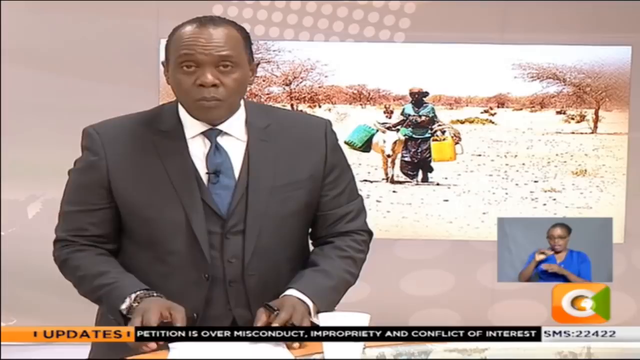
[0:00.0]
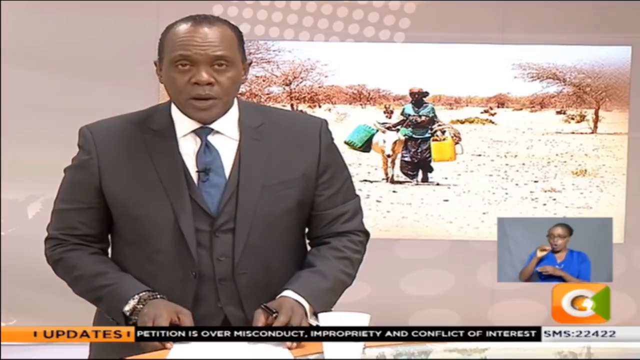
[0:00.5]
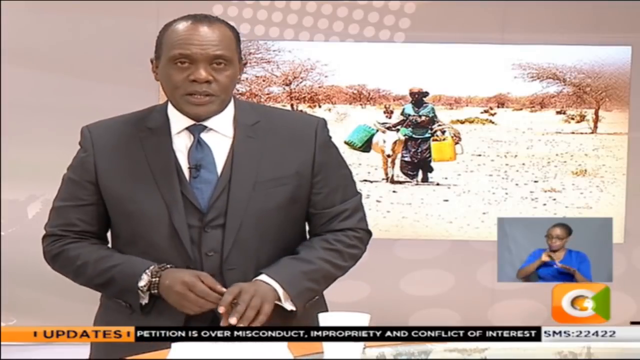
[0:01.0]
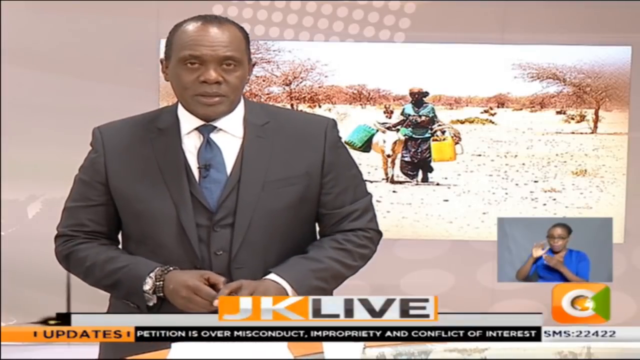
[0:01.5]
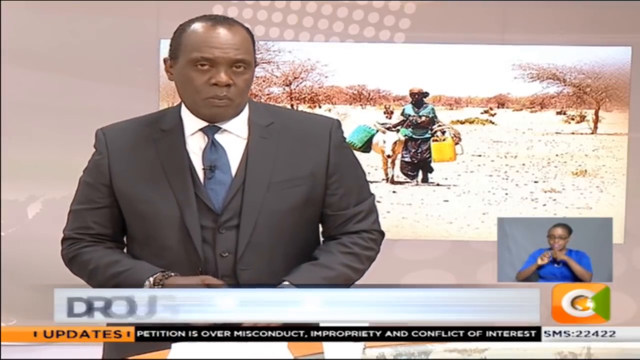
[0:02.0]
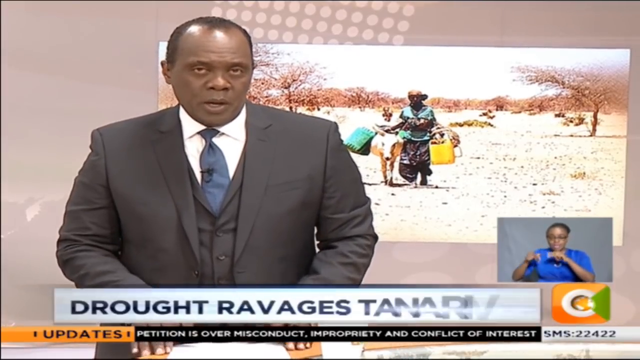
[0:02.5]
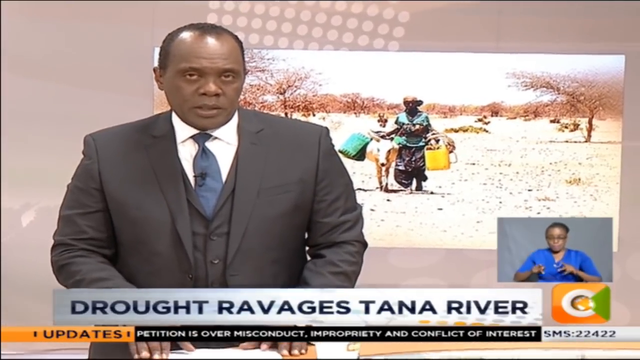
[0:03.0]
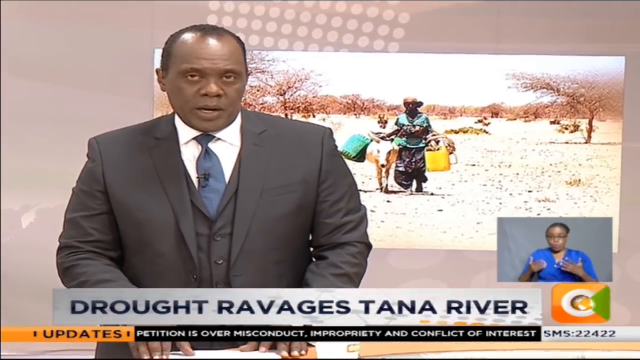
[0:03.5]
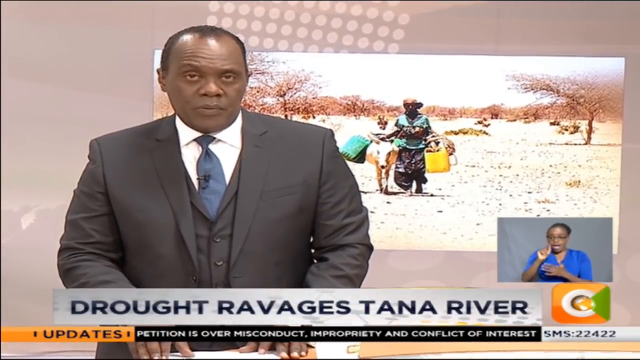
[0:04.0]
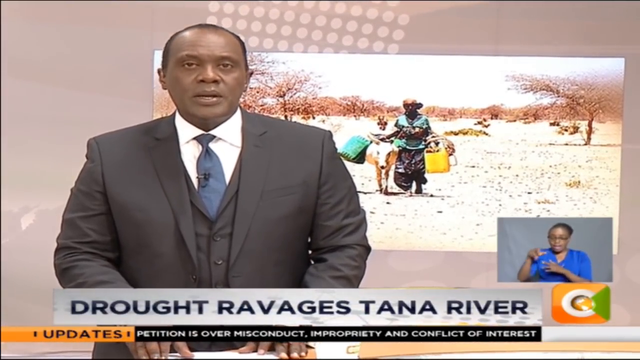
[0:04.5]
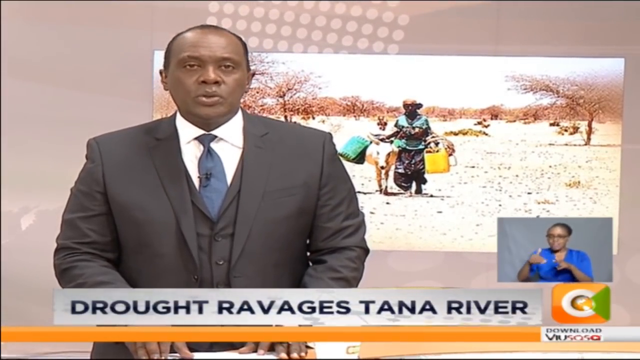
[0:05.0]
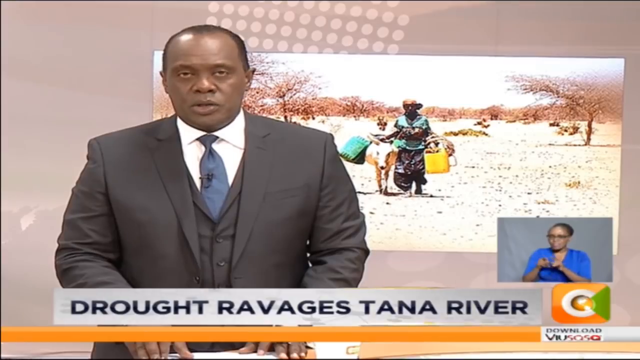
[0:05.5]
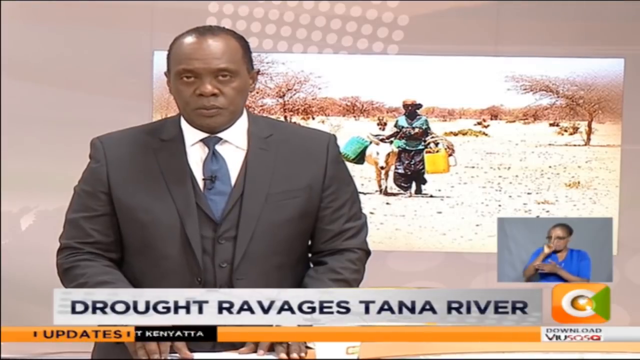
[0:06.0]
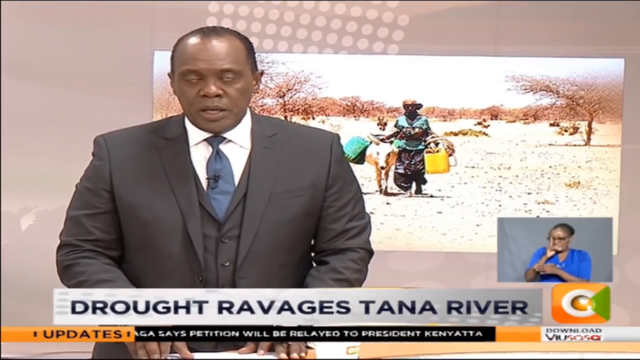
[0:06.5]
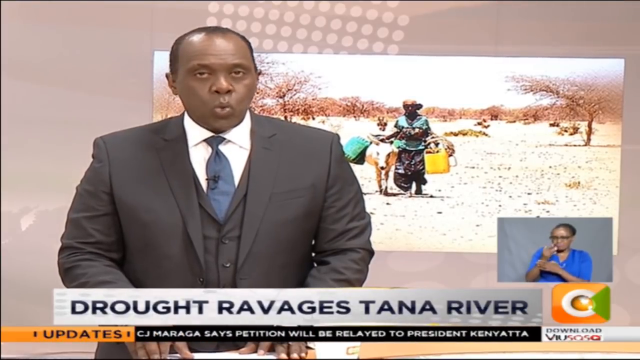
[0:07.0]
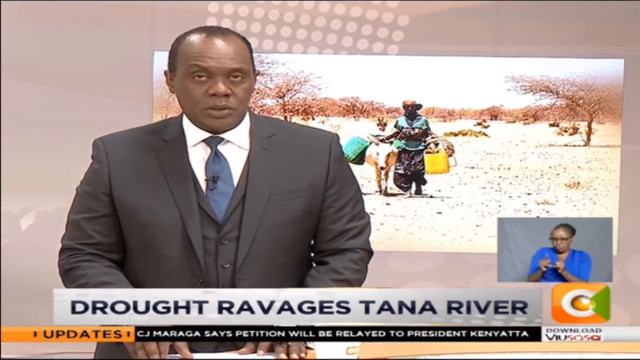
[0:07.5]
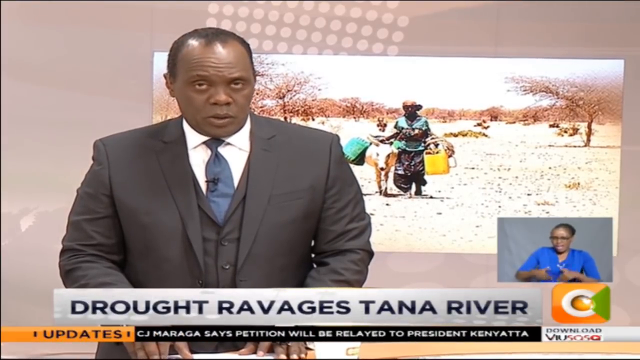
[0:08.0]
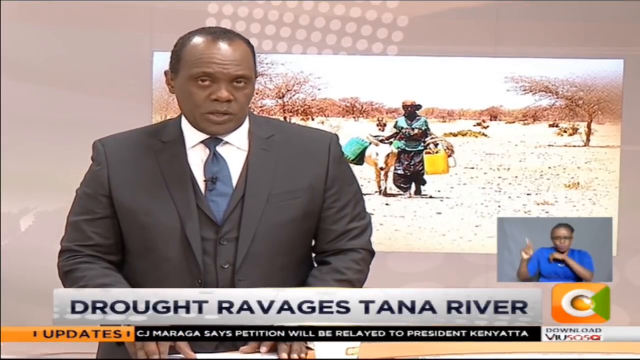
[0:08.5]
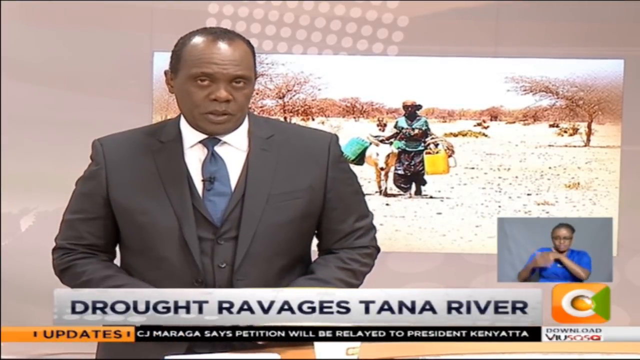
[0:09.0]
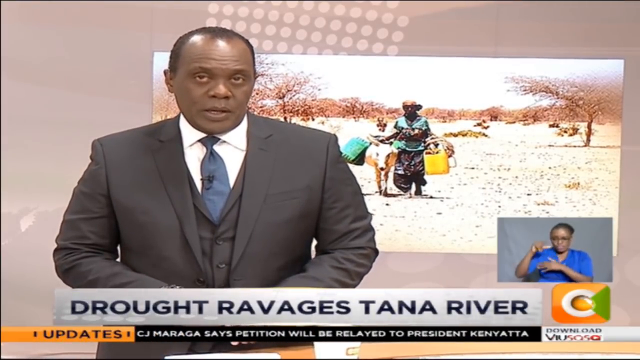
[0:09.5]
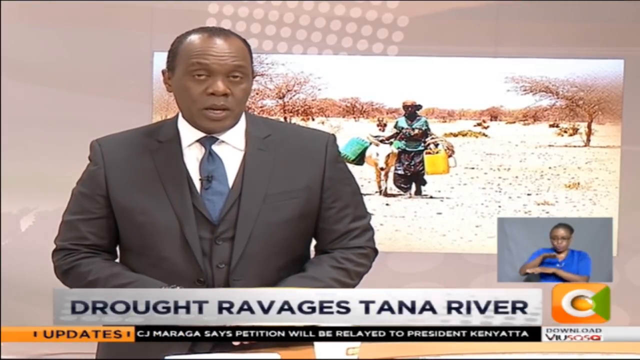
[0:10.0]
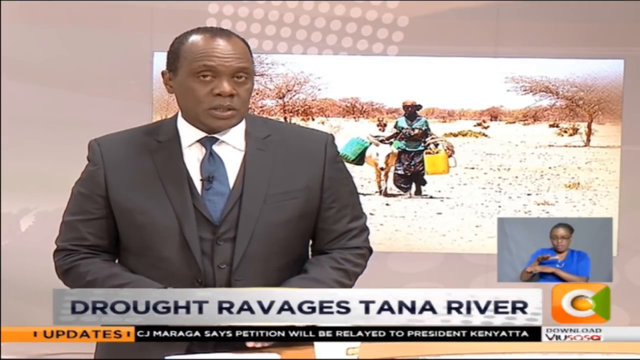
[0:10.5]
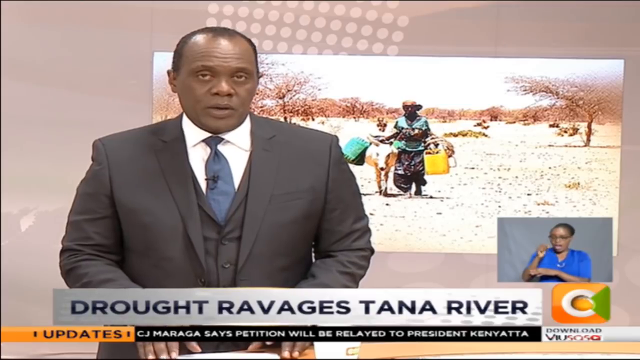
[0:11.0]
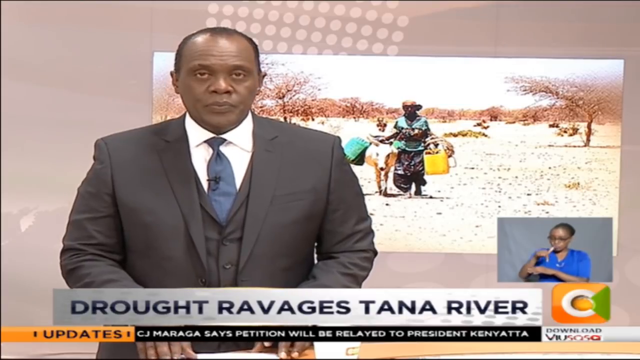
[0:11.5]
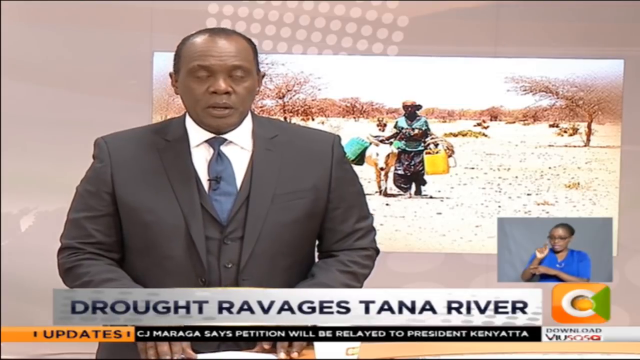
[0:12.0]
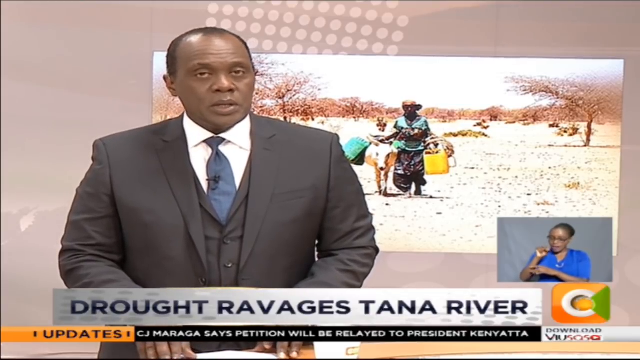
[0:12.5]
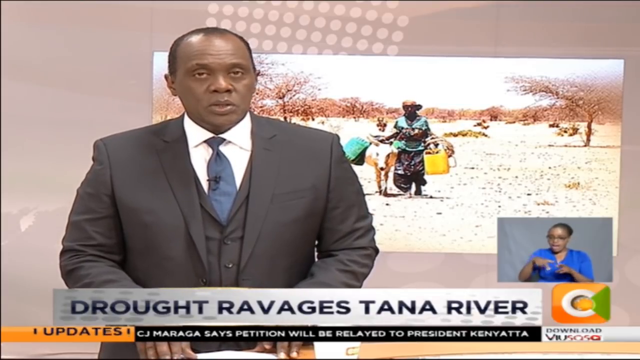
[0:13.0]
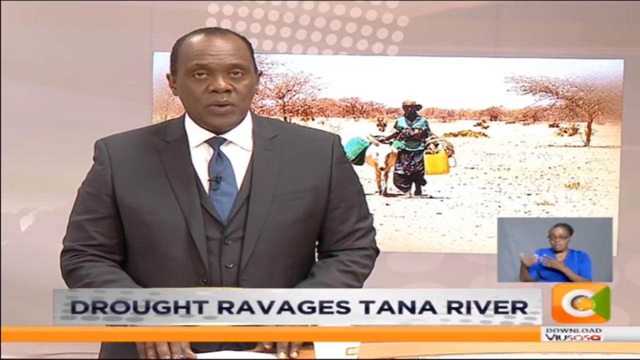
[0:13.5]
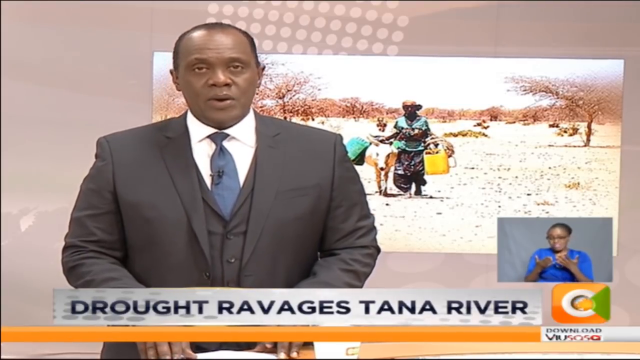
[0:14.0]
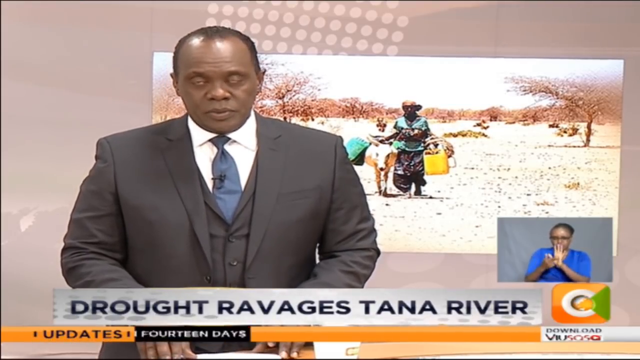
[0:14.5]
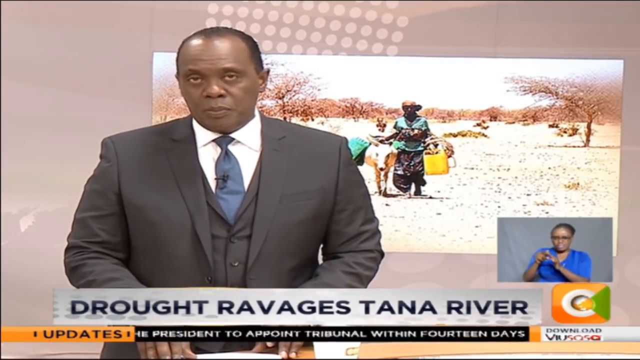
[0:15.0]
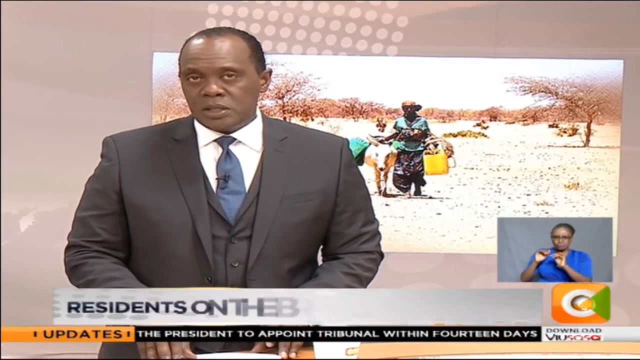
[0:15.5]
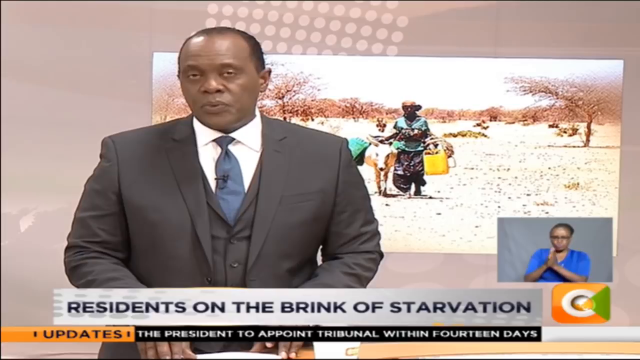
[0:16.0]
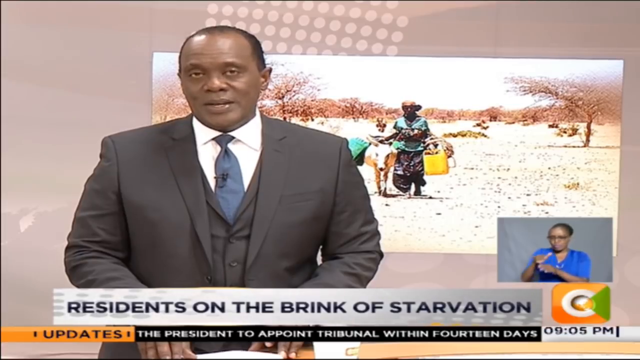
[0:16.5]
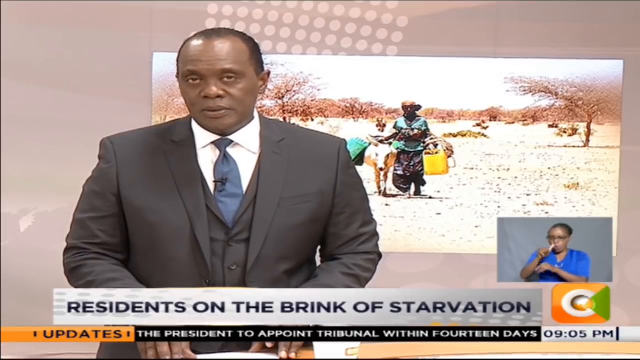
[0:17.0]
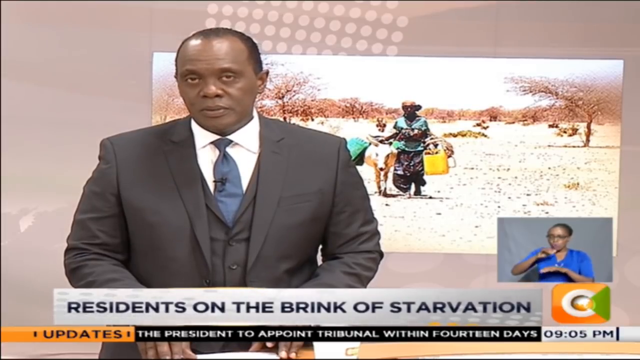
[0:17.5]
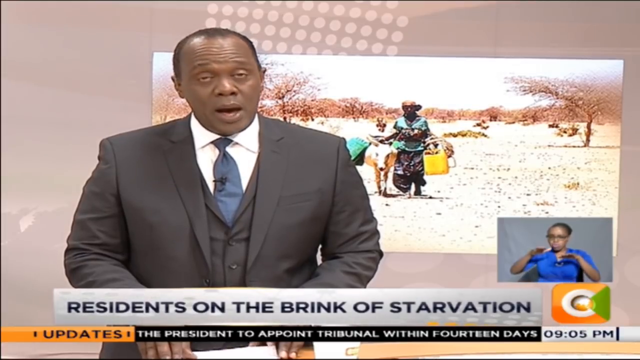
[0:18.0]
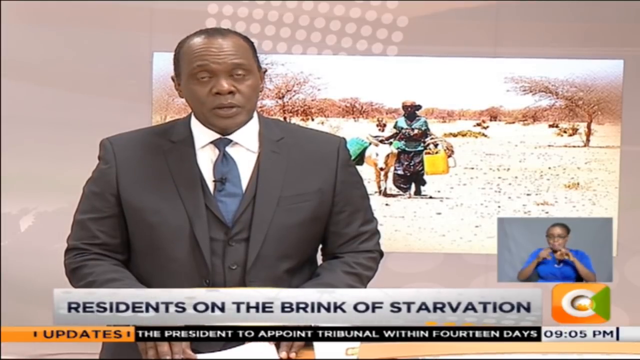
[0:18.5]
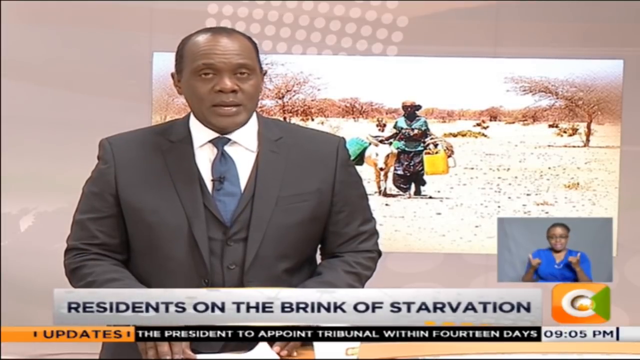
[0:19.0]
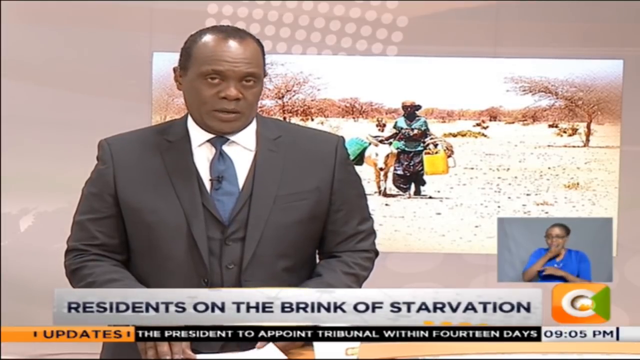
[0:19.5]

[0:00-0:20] What looks like a news story from a specific region in Africa opens with a man in the foreground, apparently in front of a green screen, presenting the news. He wears a black suit with a bluish tie and has a microphone attached. A sign language interpreter appears down below. In the background behind him, two people walk: one is on what looks to be a donkey while the other walks next to him. The people hold various yellow and green bags, various trees appear around the outside of the frame, and the ground looks somewhat like desert. Titles pop up at the bottom reading "drought ravages Tana River", on a whitish gray background with blue or dark black font, and "residents on the brink of starvation", also in black.